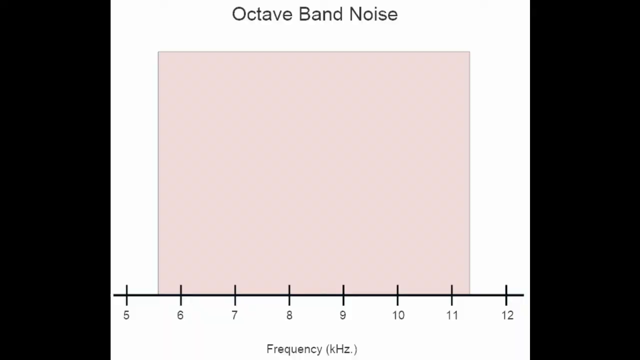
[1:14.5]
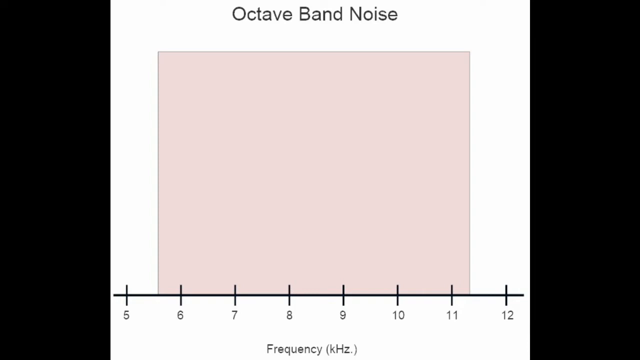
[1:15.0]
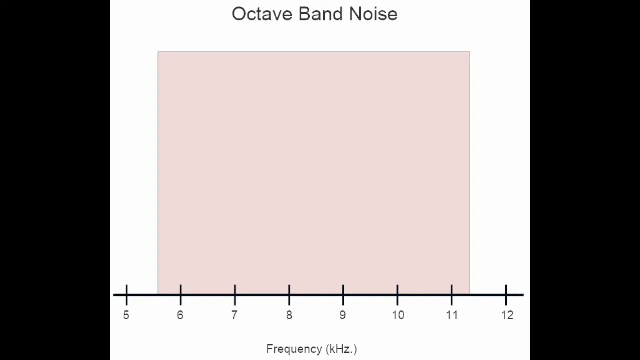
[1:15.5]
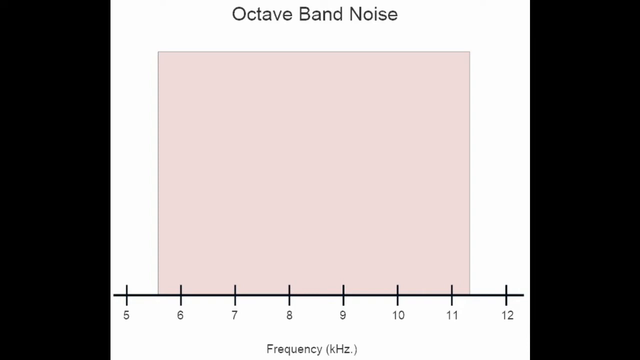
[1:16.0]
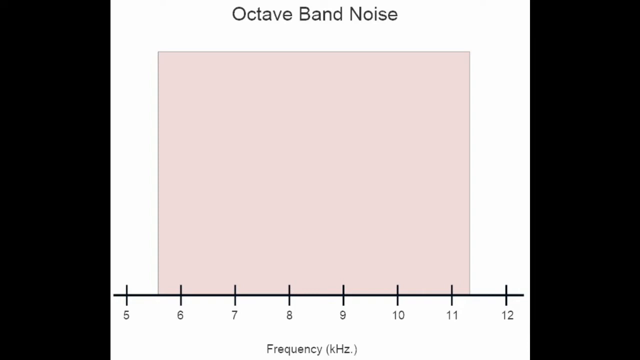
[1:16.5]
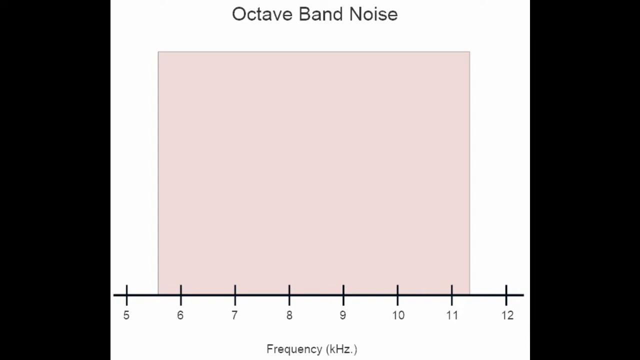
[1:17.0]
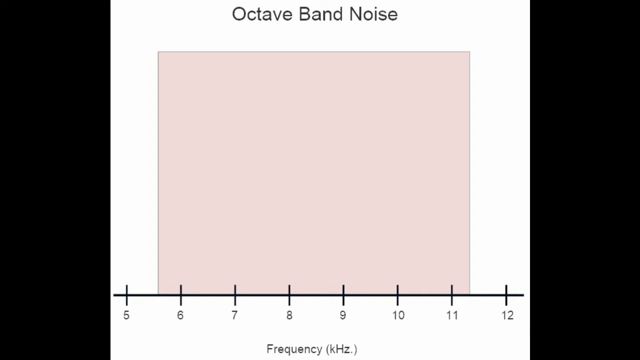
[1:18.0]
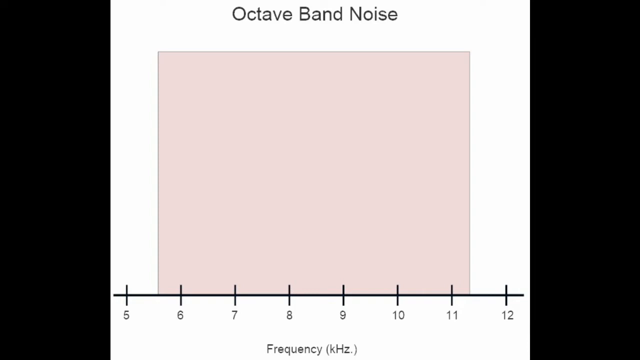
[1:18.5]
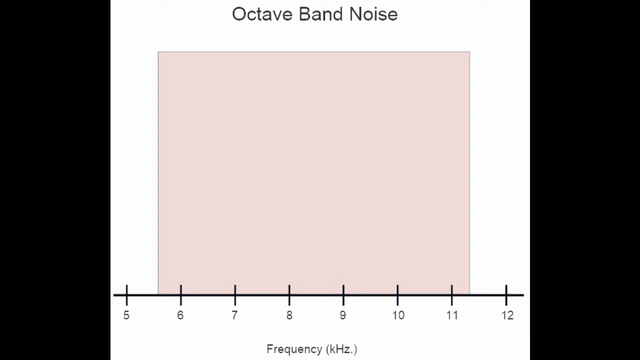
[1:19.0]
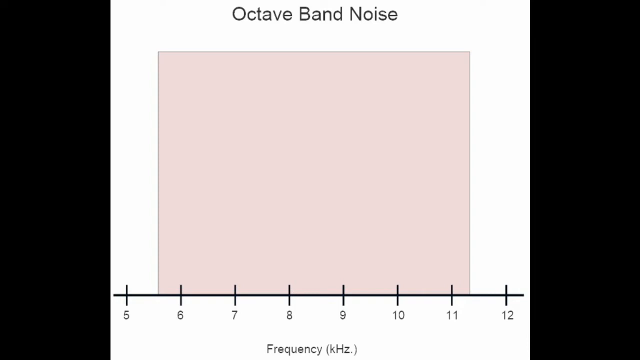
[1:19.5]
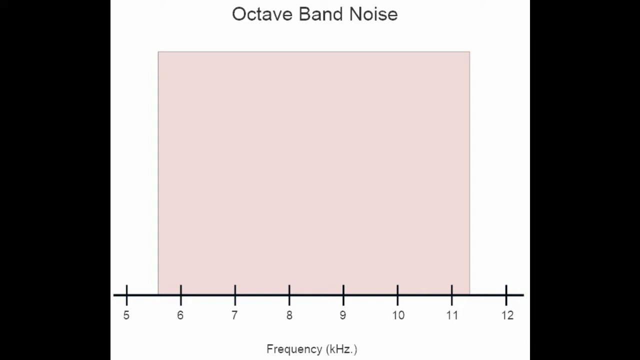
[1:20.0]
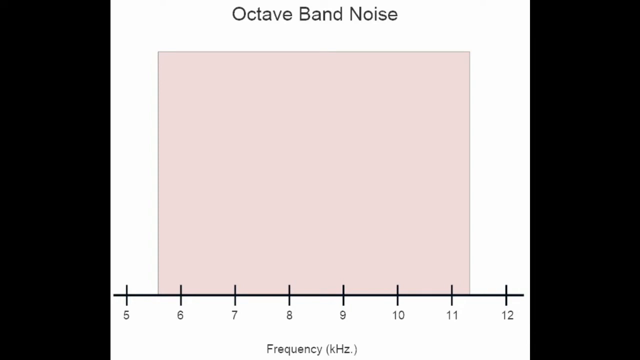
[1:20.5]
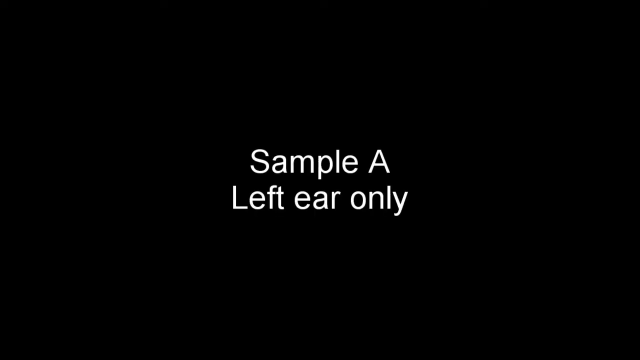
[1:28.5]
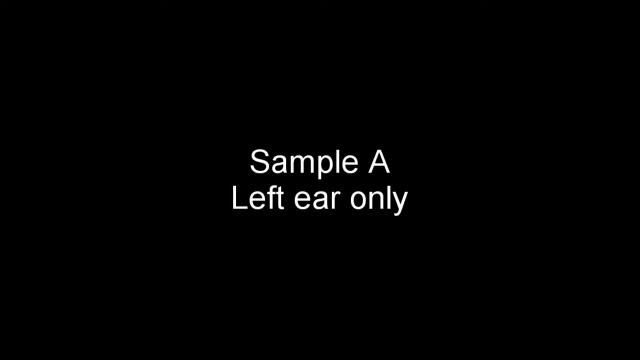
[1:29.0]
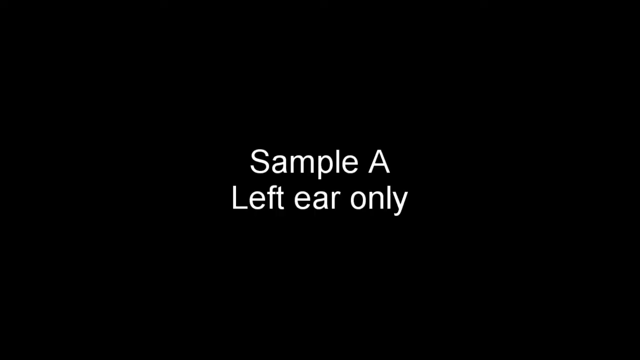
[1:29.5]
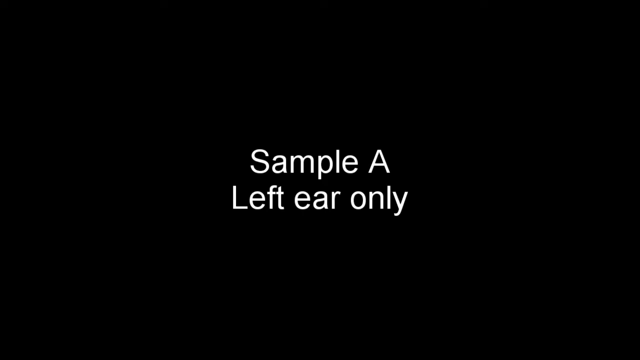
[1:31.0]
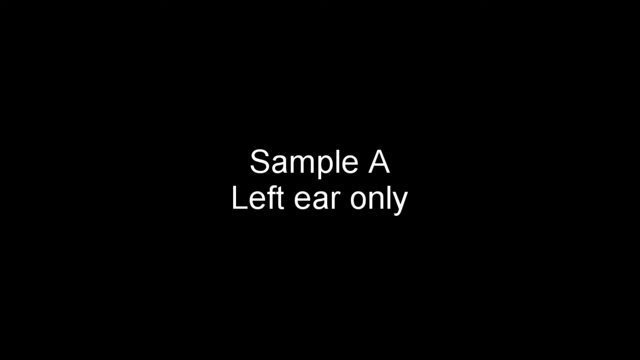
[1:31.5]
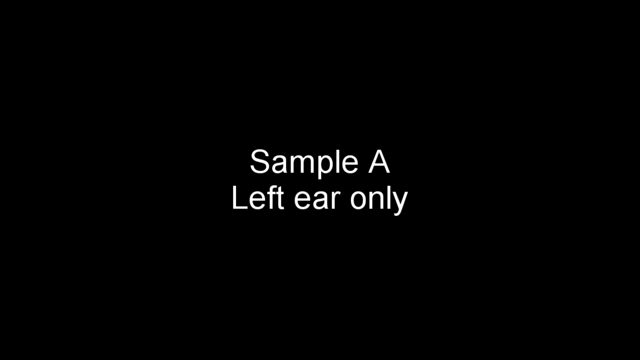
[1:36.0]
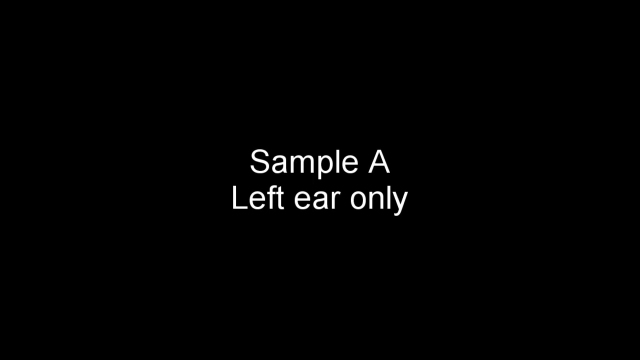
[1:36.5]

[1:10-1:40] A black background stays on the screen, then the video moves to a white image with bold black text at the top reading "octave band noise." There is a very large salmon pink square box and a black line at the bottom of the screen with additional black lines through it, numbered 5, 6, 7, 8, 9, 10, 11 and 12, with text at the bottom reading "frequency KHZ." A black background follows for a period of time, then white text pops up reading "Sample A, left ear only." Another black background follows, and then text pops up very quickly reading "sample B, left ear only."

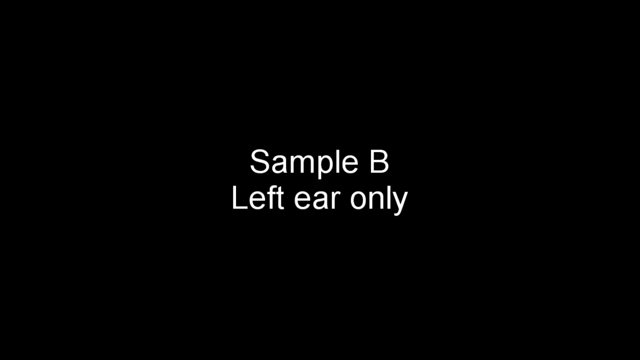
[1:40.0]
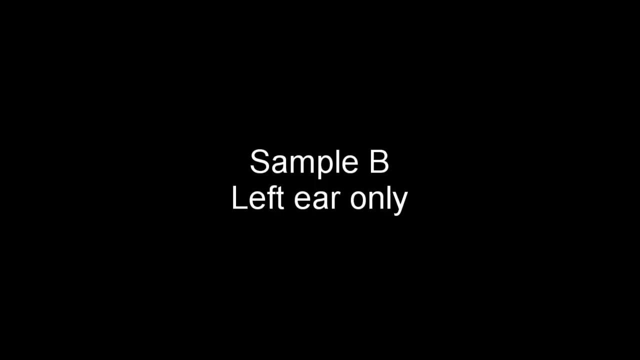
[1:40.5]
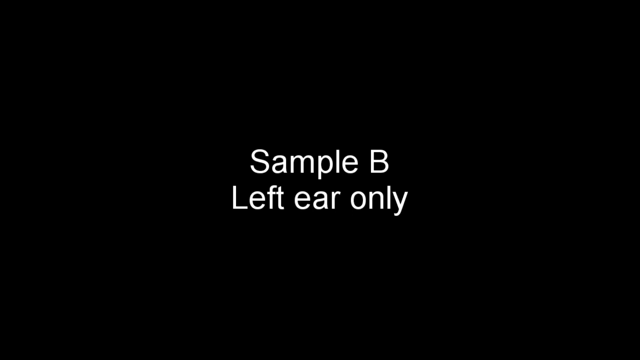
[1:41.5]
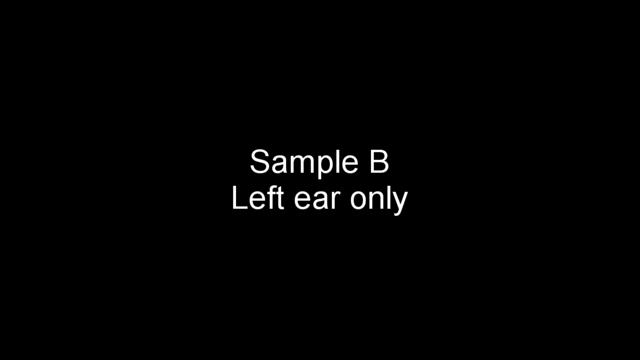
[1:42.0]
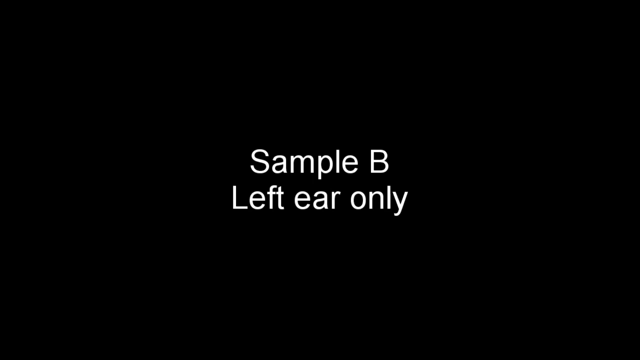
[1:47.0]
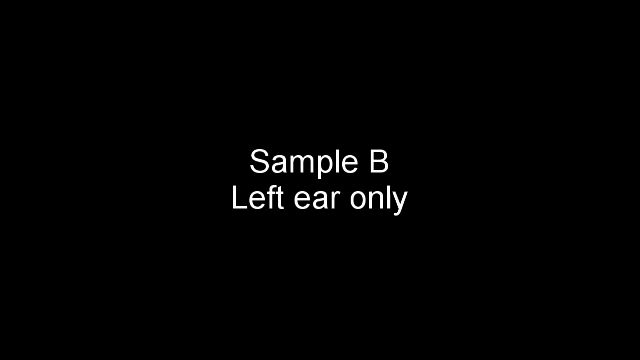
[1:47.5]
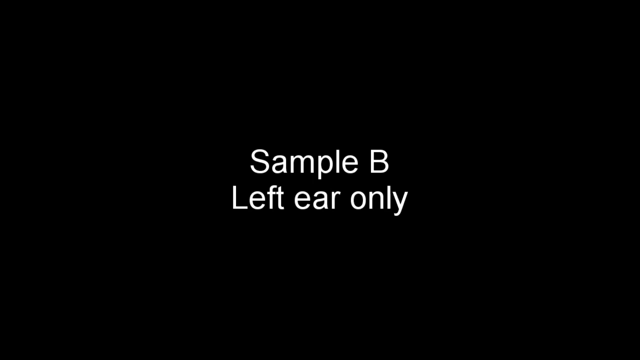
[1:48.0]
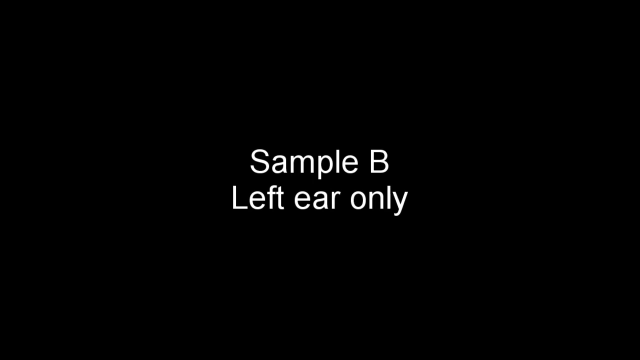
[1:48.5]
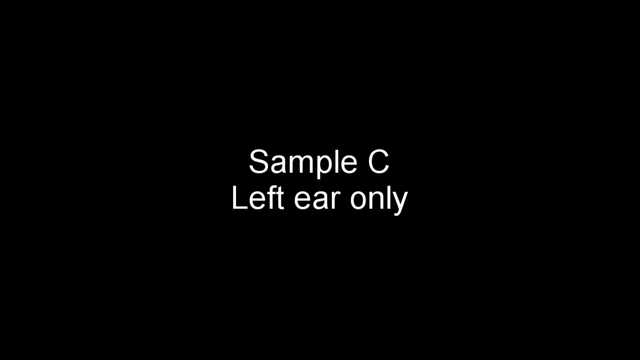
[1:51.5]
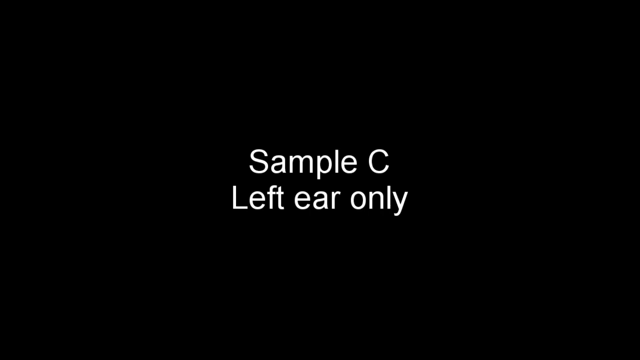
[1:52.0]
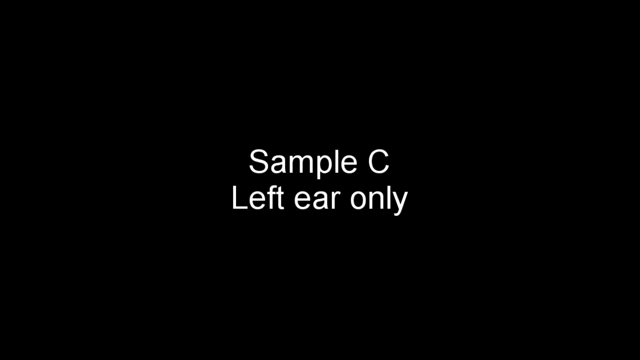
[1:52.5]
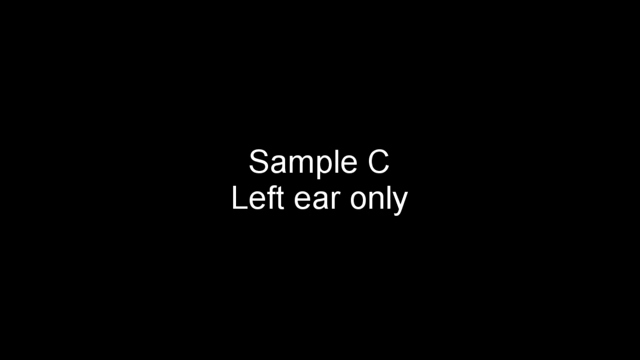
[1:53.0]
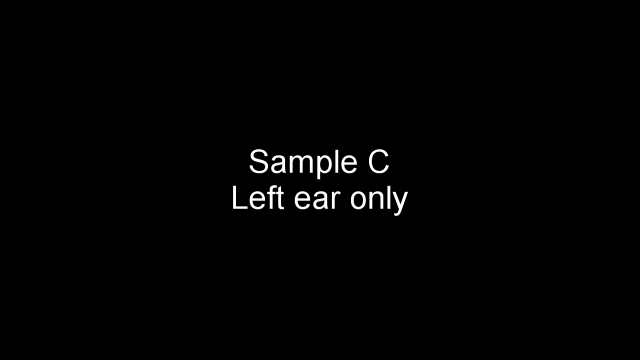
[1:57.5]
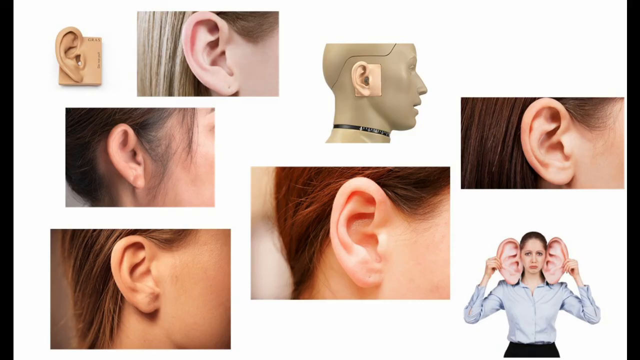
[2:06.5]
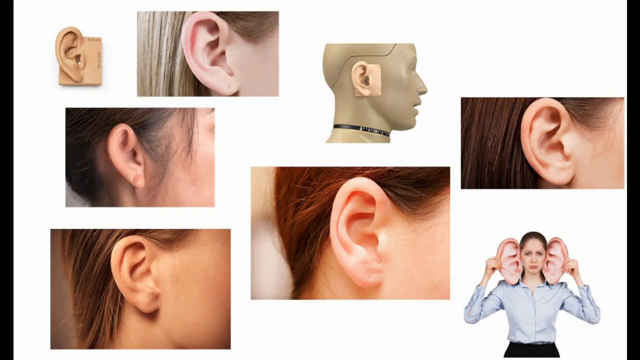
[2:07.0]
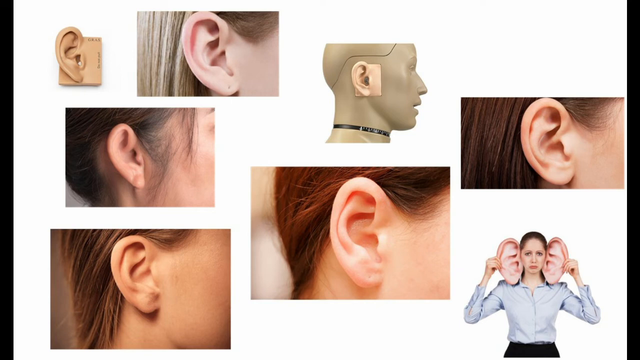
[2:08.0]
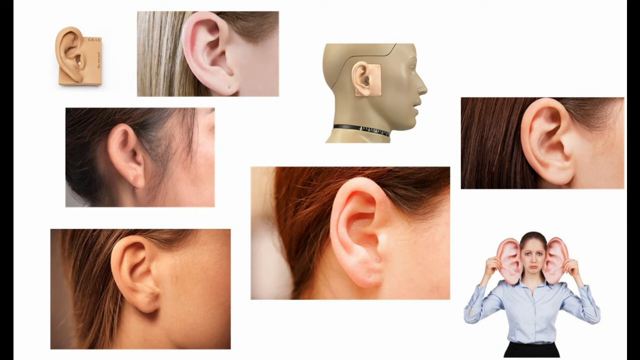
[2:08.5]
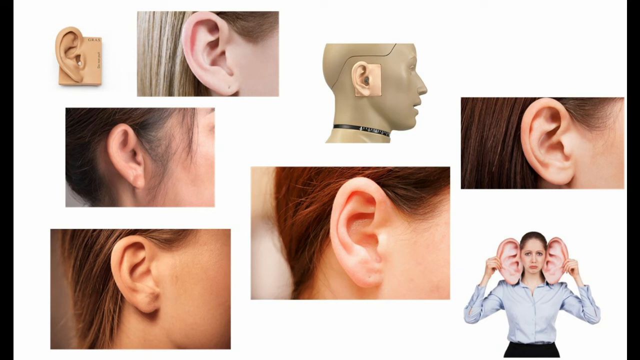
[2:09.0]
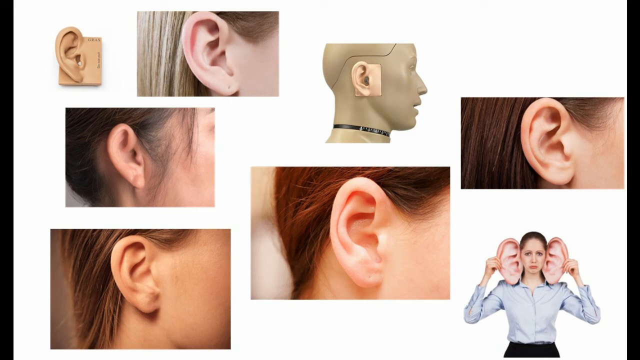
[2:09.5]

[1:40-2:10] A black background shows white bold text in the center reading "sample B left ear only," and the black background stays on the screen for a period of time. The text goes off the screen, and white bold text pops up in the center reading "sample C left ear only," which stays for a period of time before going off the screen. For a period of time the screen is plain black. The video then moves to about five different pictures of people's ears. There is also a mannequin's head showing an ear, and an individual plastic ear next to one of the photos in the top left corner. In the bottom right corner is an image of a woman with very large ears who is tugging at them and pouting.